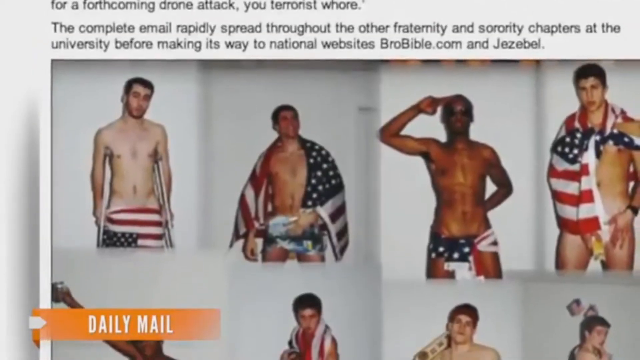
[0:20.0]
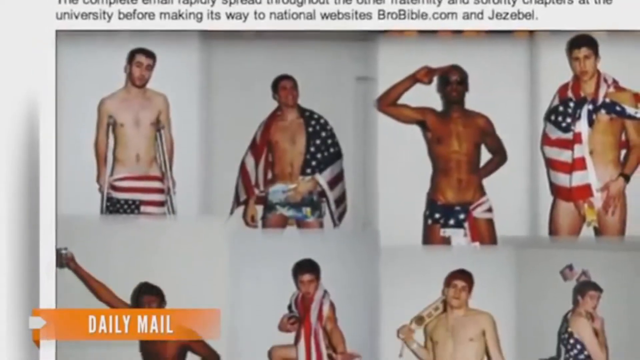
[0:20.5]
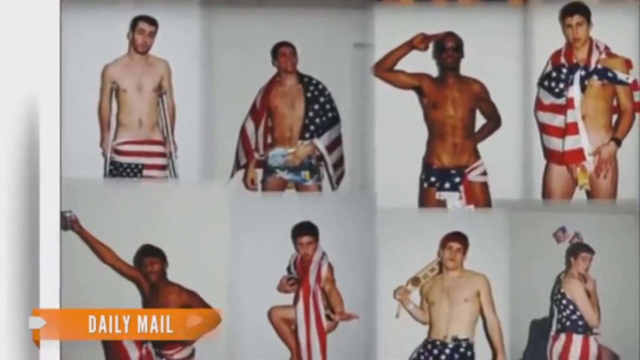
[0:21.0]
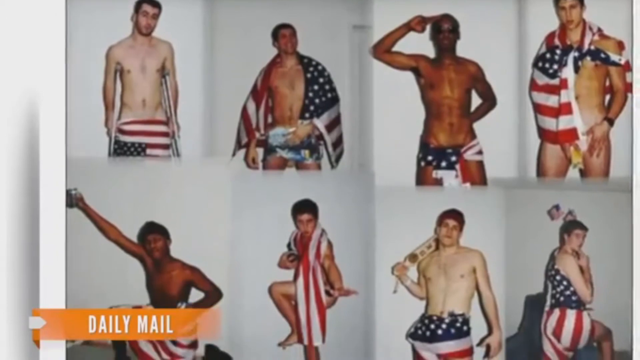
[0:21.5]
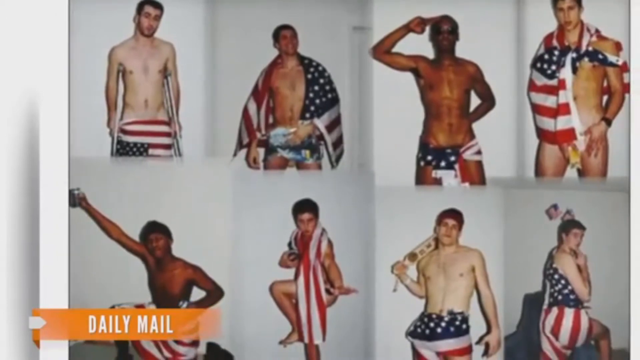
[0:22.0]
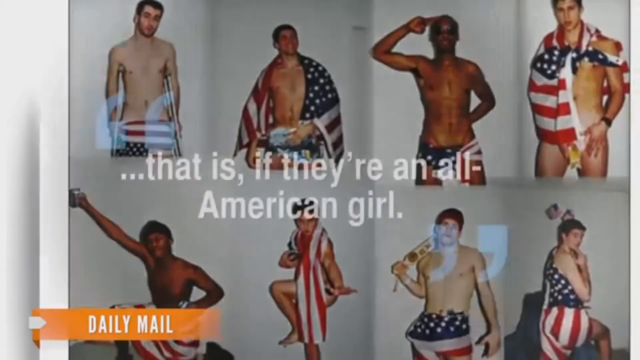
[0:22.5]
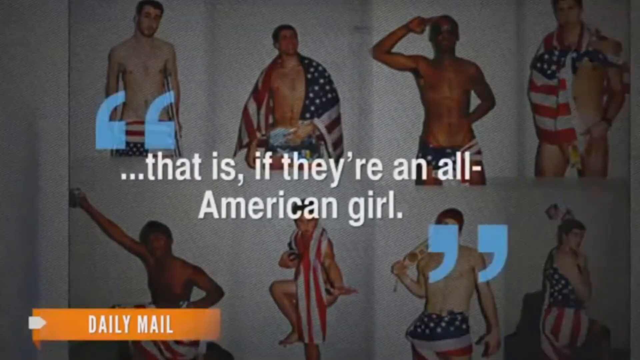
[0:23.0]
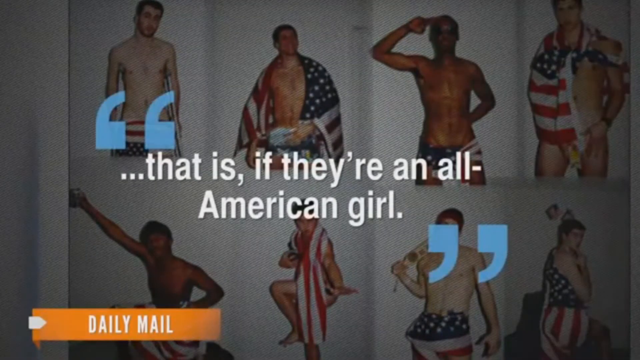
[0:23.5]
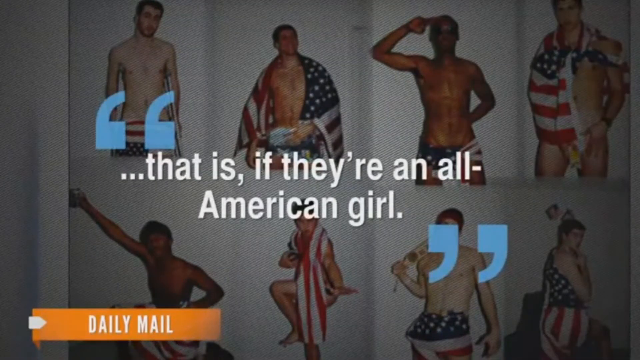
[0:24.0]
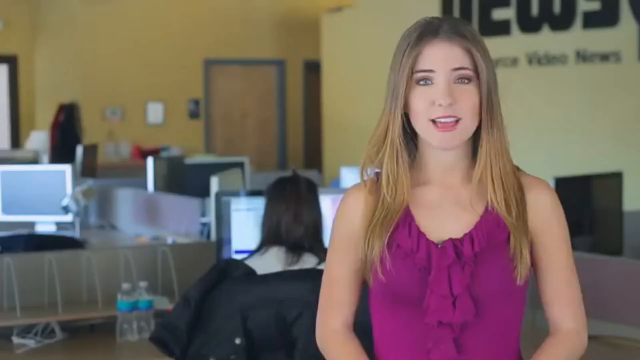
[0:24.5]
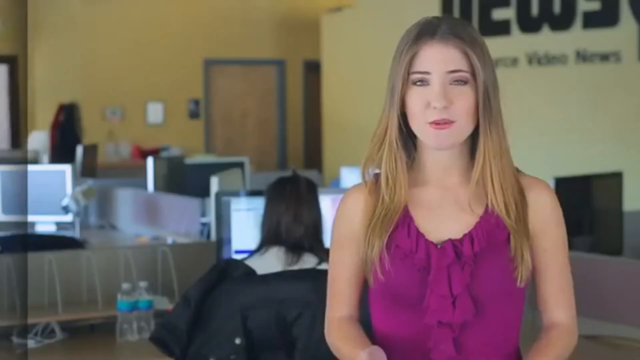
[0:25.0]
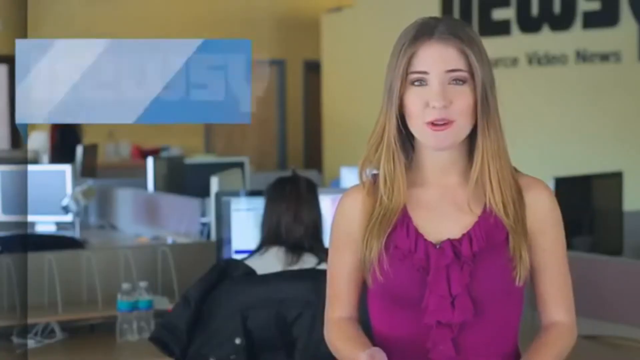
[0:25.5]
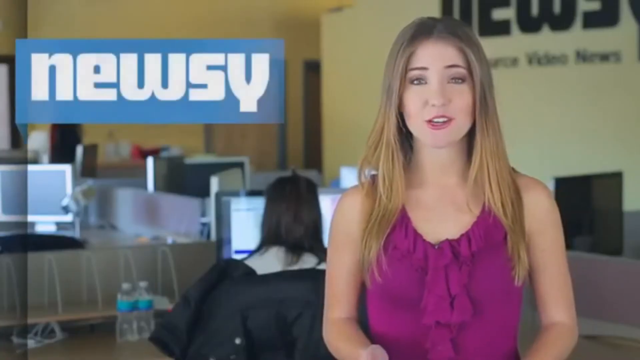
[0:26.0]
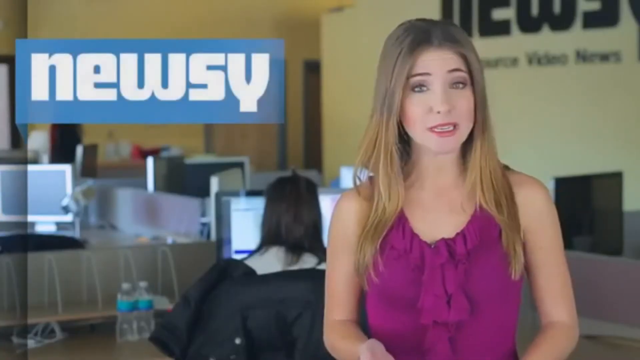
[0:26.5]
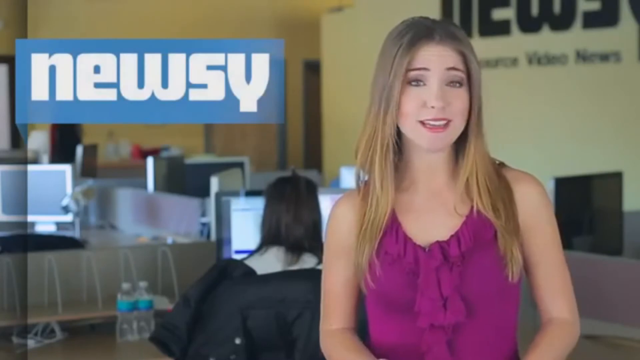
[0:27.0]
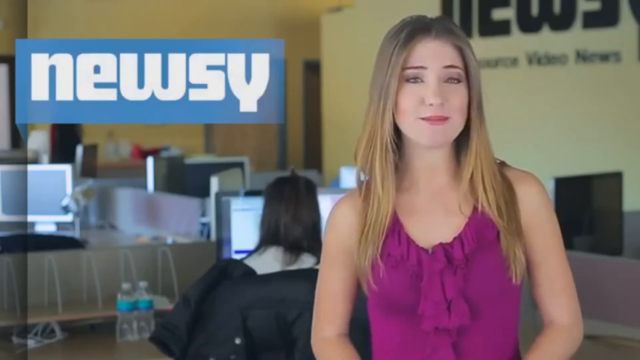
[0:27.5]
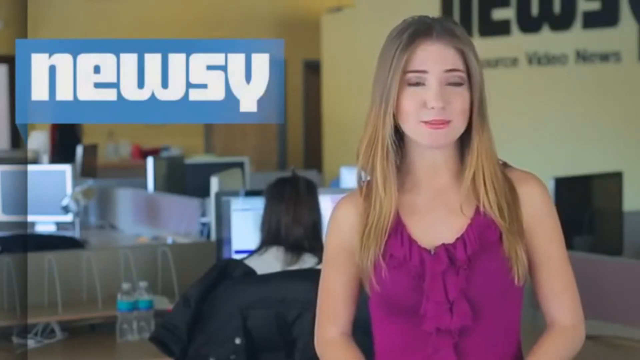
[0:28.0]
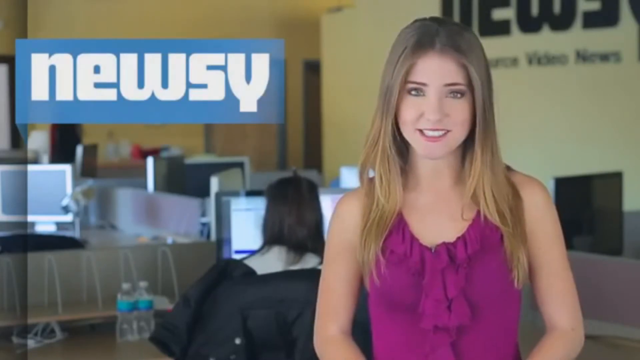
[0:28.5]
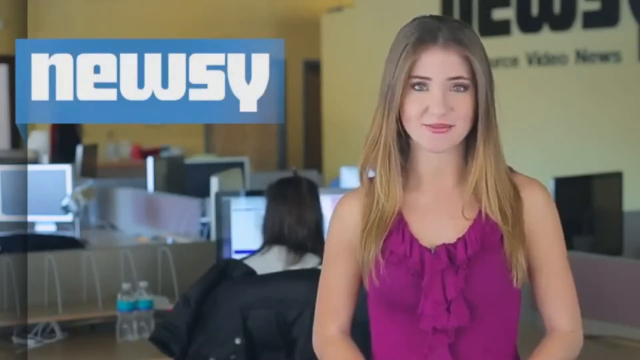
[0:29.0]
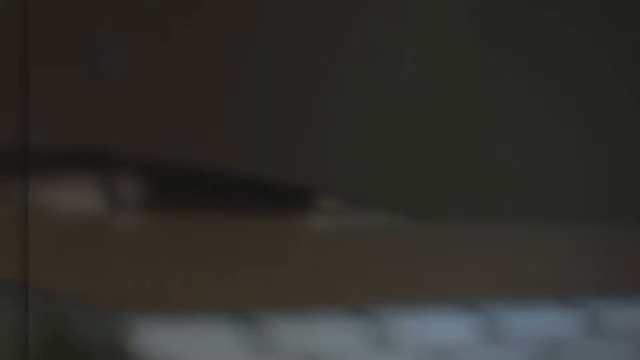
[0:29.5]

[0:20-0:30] An image from a news article credited to the Daily Mail shows a number of men who are mostly naked aside from American flags wrapped around their middle sections or other parts of their bodies. A quote appears over the image in white text: "...that is, if they're an all-American girl". The scene changes to a person looking at the camera and speaking towards it. A blue and white logo appears at the top left, identifying this as Newsy, and the woman speaks while standing in an office.